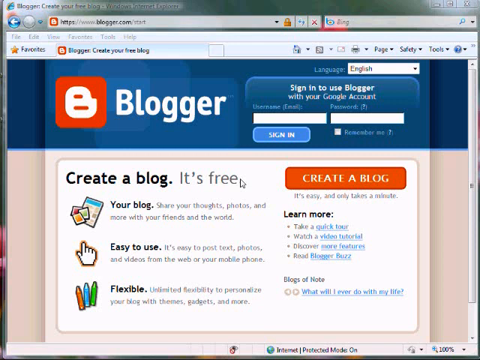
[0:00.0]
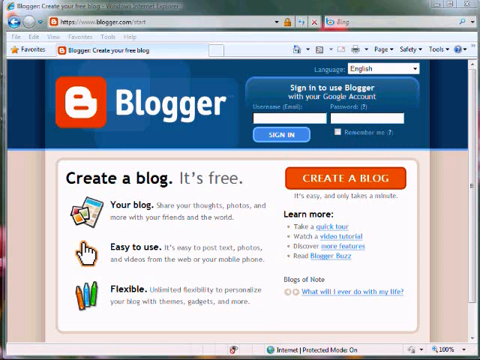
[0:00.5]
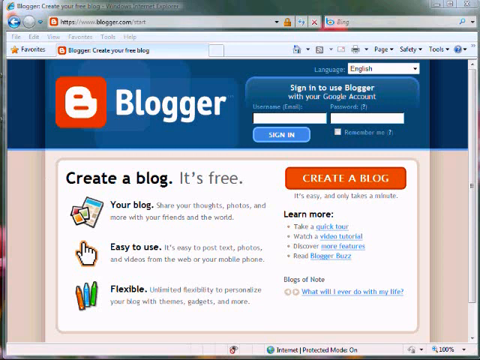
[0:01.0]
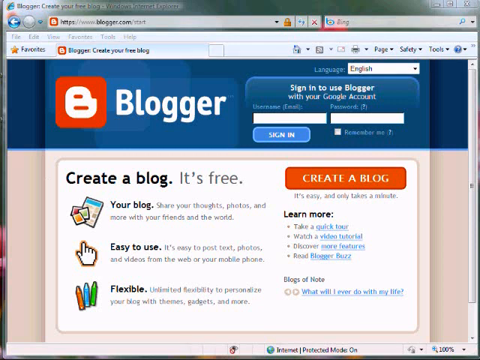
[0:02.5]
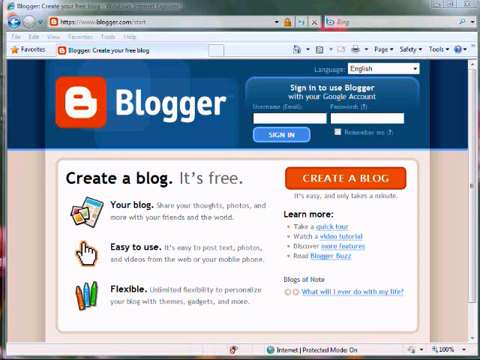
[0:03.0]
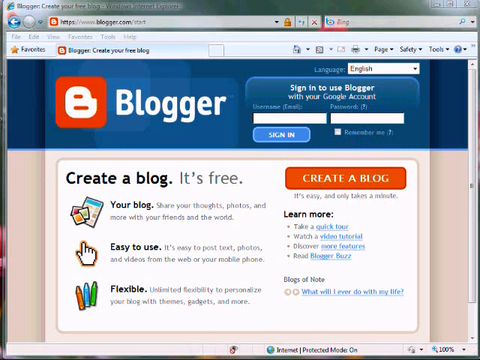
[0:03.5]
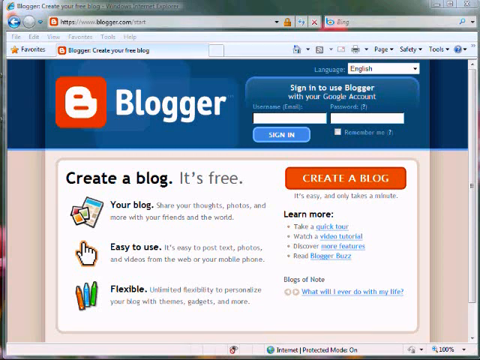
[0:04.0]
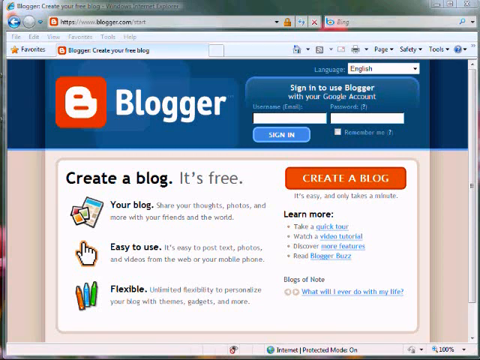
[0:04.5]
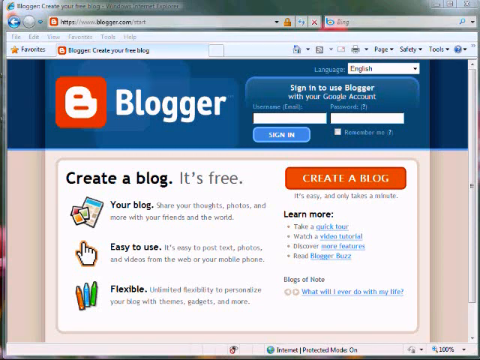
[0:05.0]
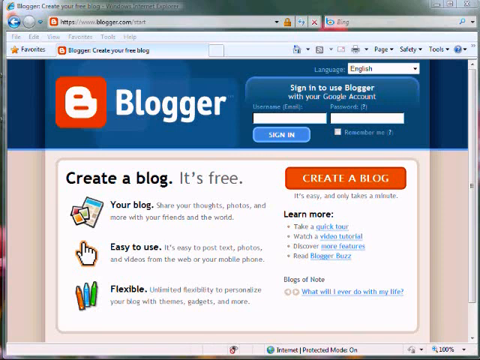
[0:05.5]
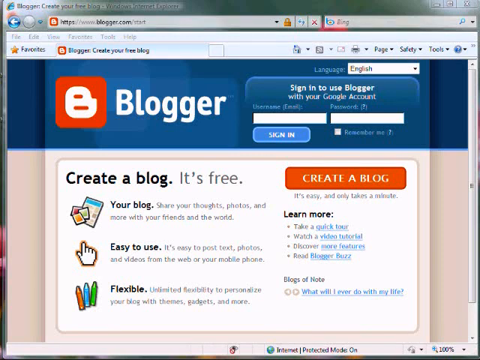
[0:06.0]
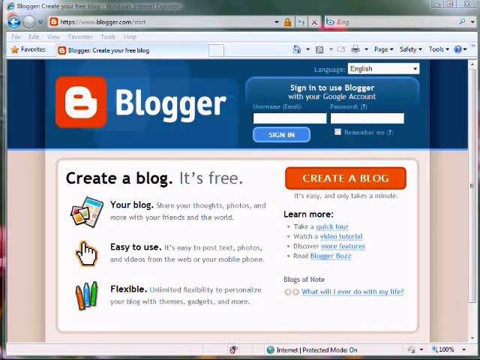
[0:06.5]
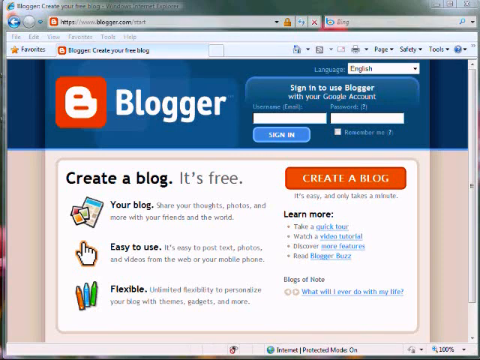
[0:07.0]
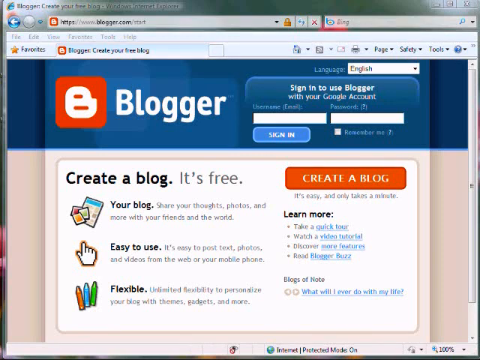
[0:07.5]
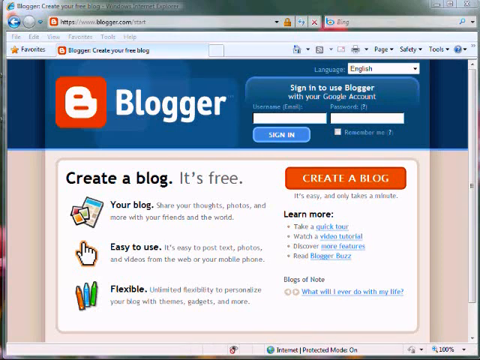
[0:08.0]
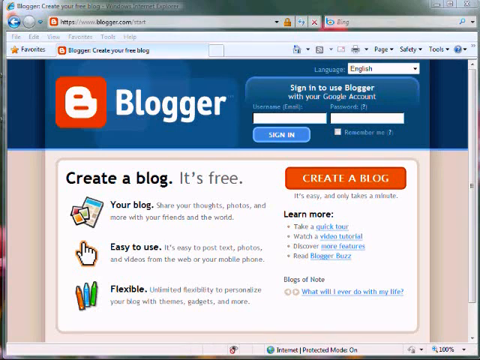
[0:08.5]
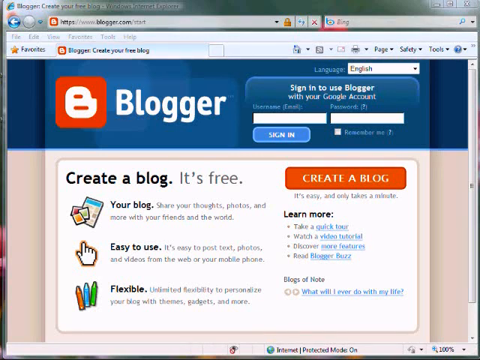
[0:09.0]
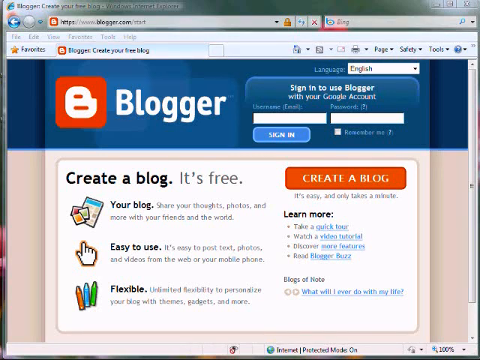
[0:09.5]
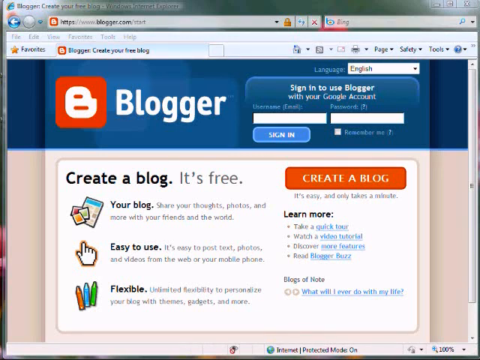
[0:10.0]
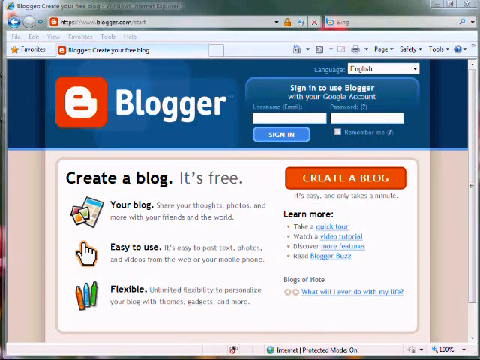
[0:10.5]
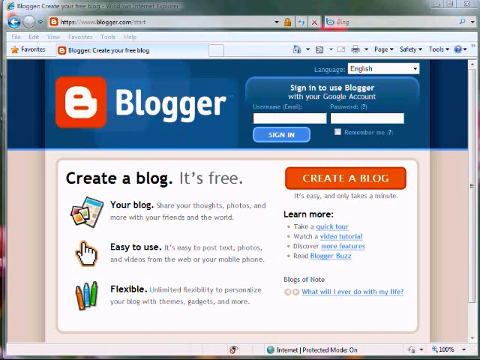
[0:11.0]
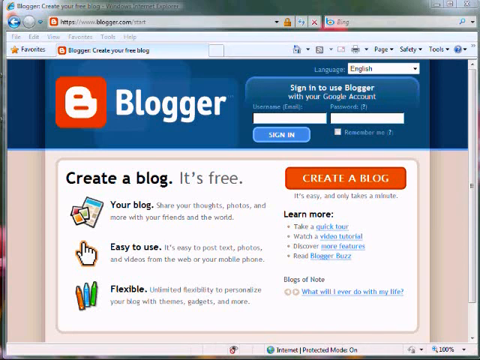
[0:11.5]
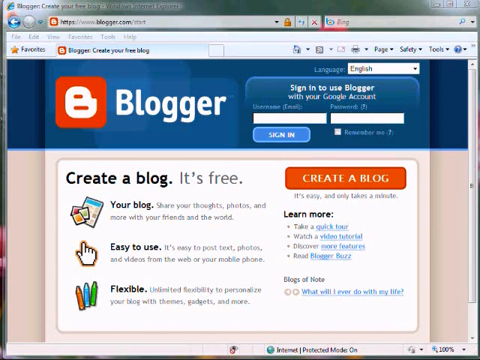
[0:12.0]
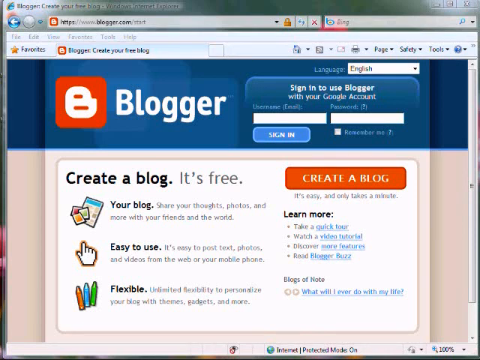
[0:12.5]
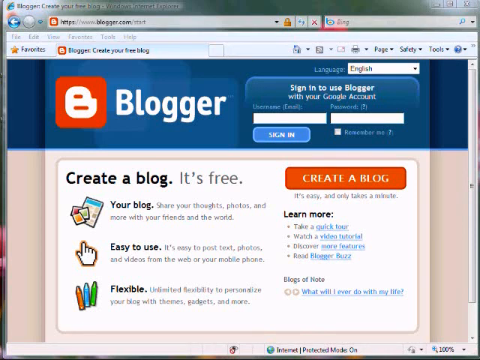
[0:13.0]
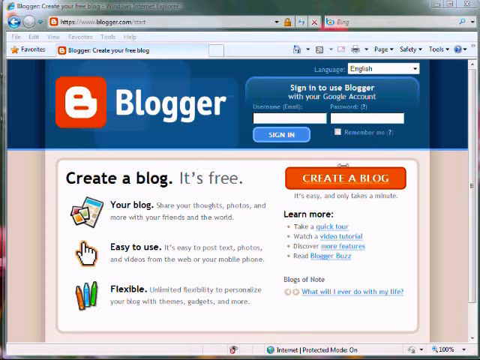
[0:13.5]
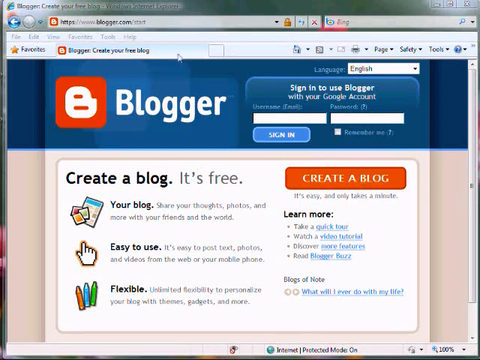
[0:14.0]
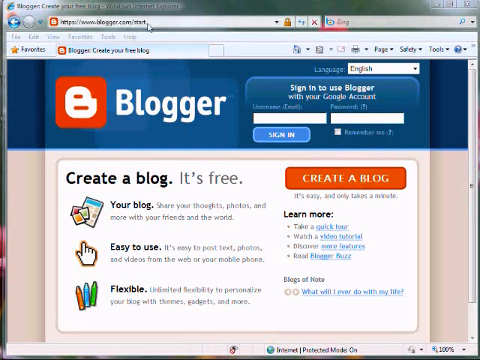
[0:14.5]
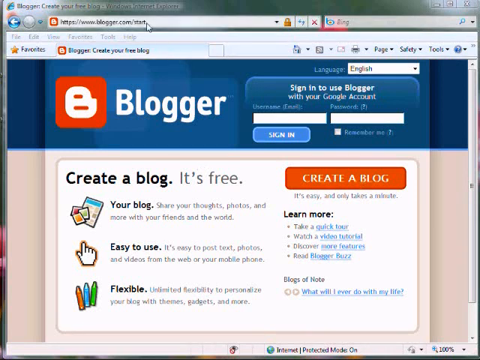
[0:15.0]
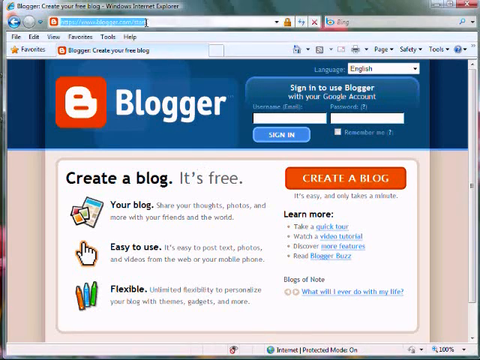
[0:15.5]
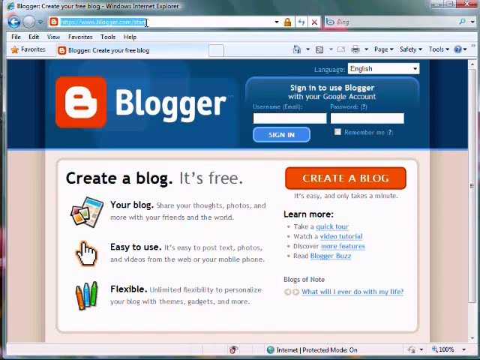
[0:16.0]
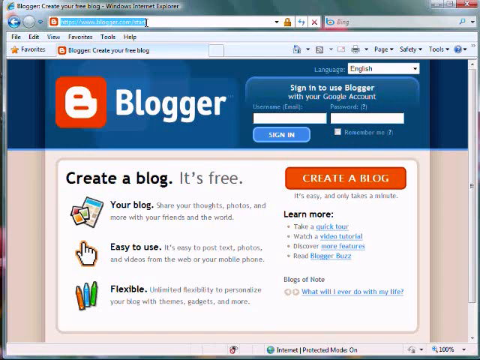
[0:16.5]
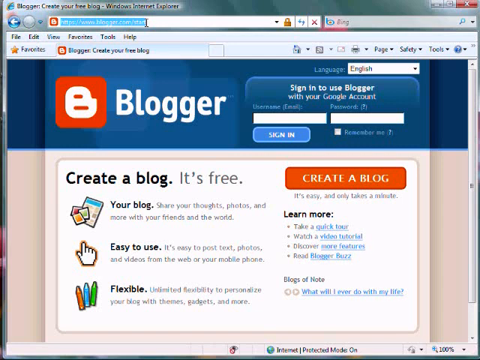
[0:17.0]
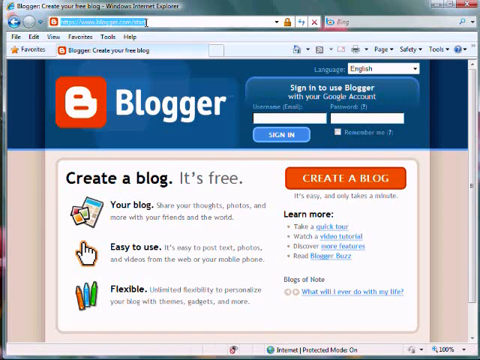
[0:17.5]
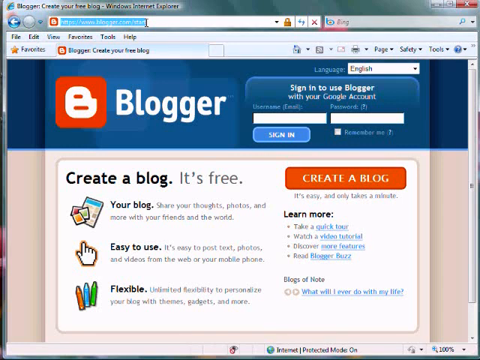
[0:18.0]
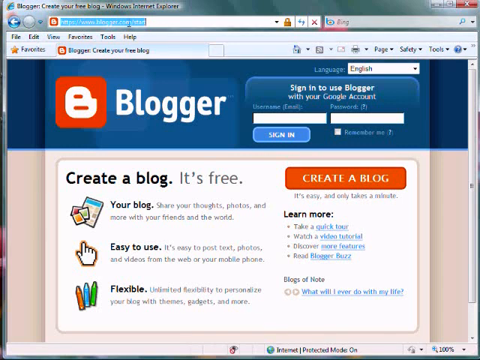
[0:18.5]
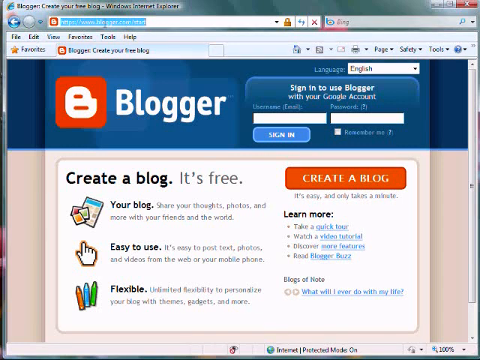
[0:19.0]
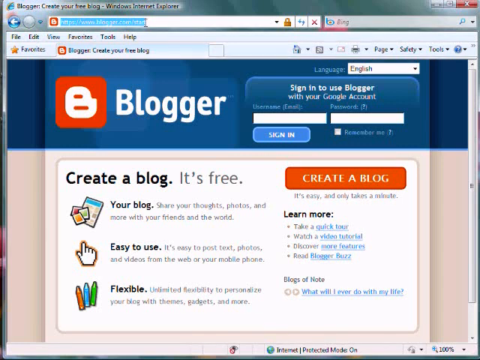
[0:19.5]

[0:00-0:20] A screen recording shows what seems to be an older version of Windows, with an Internet Explorer browser window open to blogger.com/start. The Blogger landing page is displayed, with a space to log in at the top right, while the main part of the page says you can create a blog and lists several benefits: it's free, it's your blog, it's easy to use, it's flexible, and it only takes a minute to sign up. The page also indicates that you can sign on to Blogger with a Google account, and English is the selected language. At the top right, the default search engine is Bing. The person recording highlights the URL at the top, their cursor hovering over it and moving around the URL.